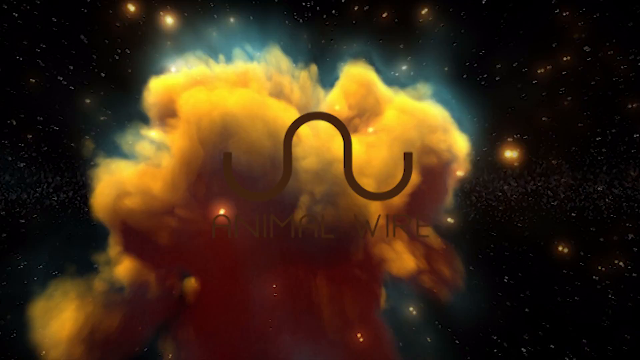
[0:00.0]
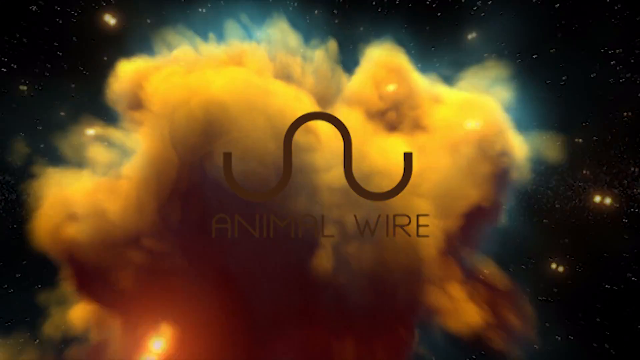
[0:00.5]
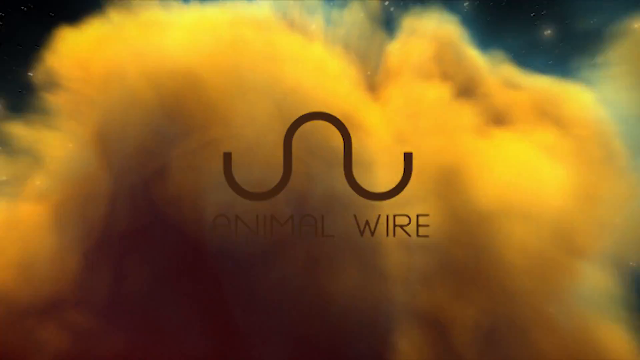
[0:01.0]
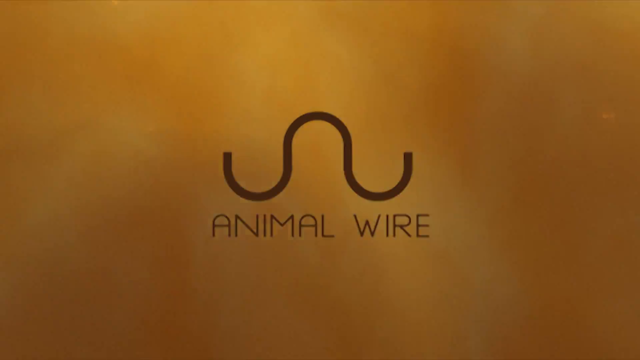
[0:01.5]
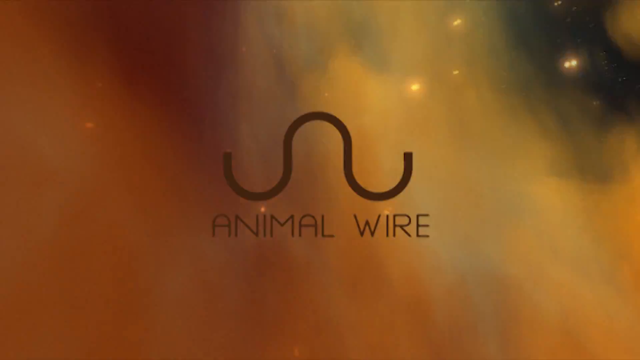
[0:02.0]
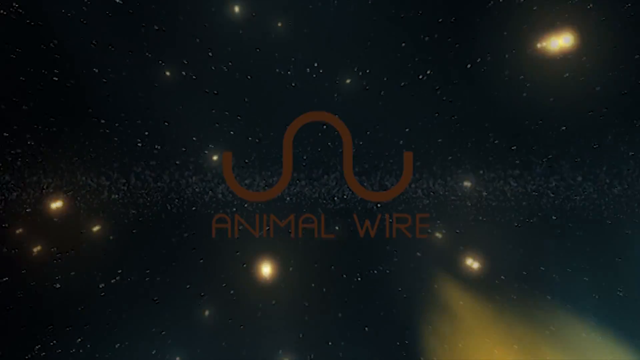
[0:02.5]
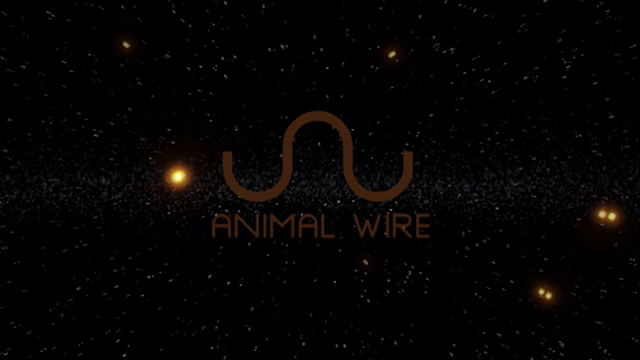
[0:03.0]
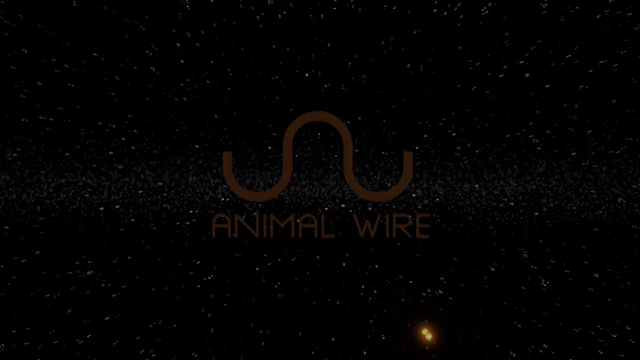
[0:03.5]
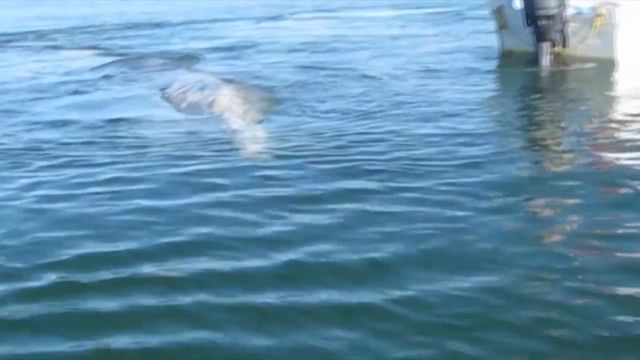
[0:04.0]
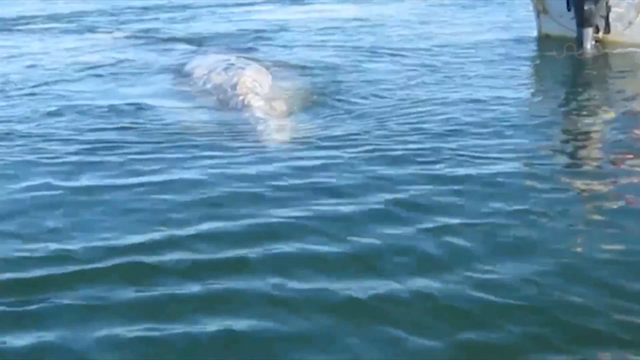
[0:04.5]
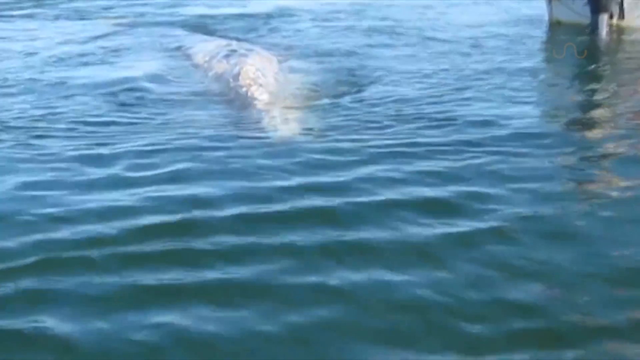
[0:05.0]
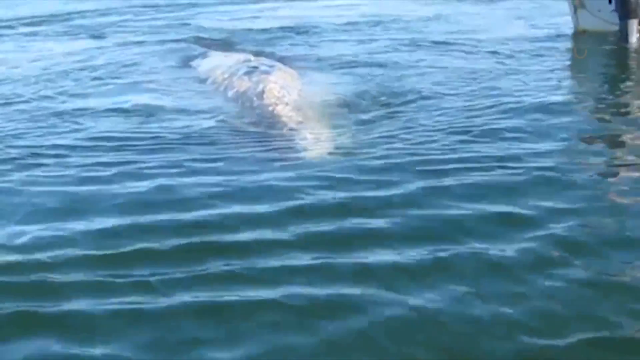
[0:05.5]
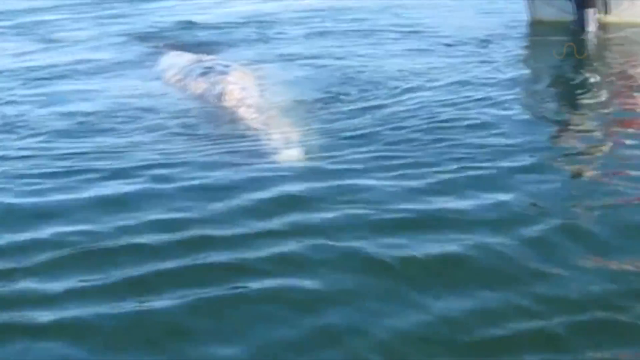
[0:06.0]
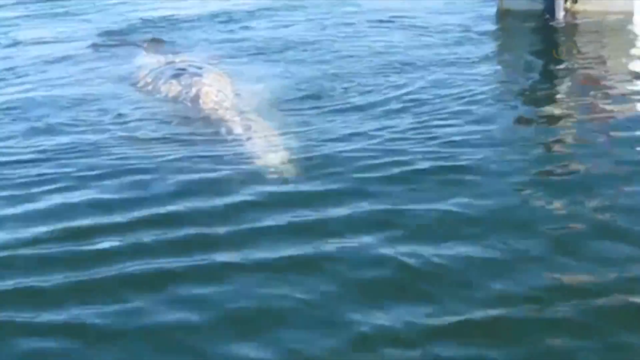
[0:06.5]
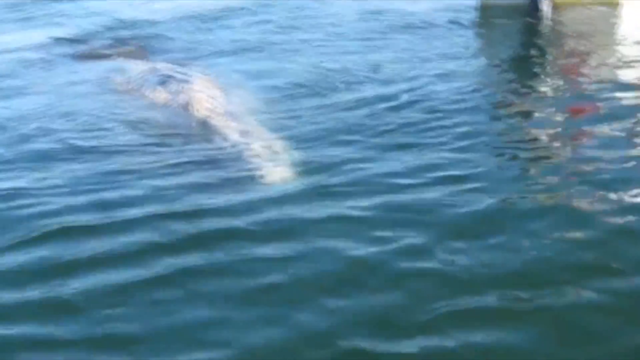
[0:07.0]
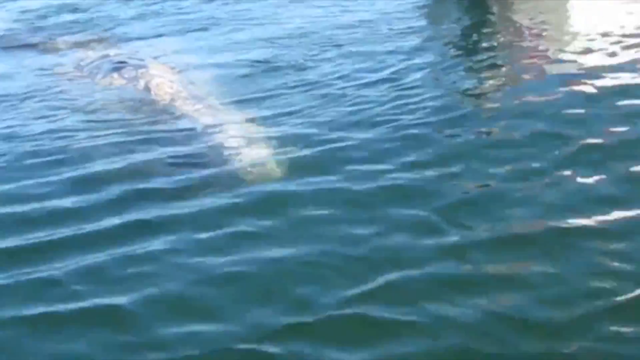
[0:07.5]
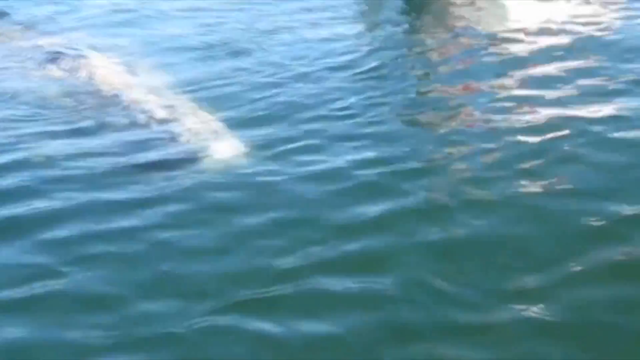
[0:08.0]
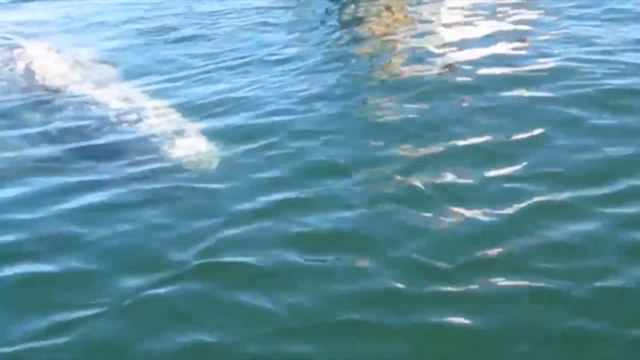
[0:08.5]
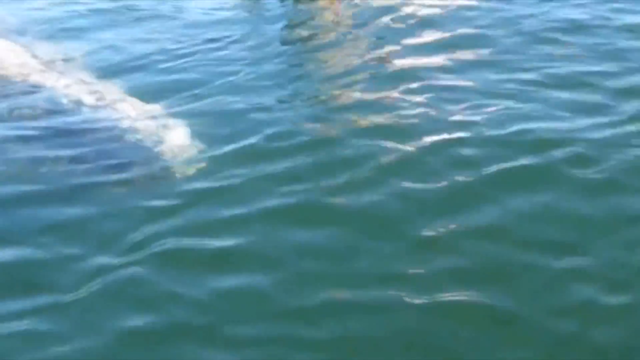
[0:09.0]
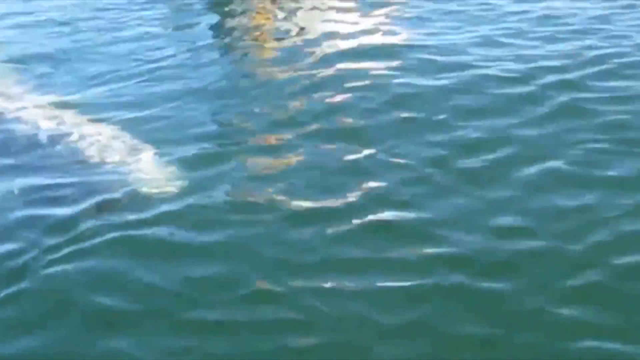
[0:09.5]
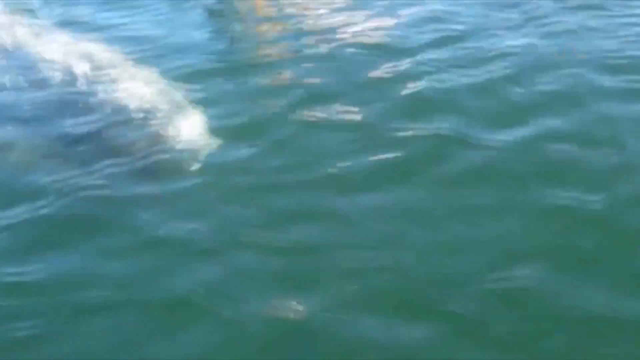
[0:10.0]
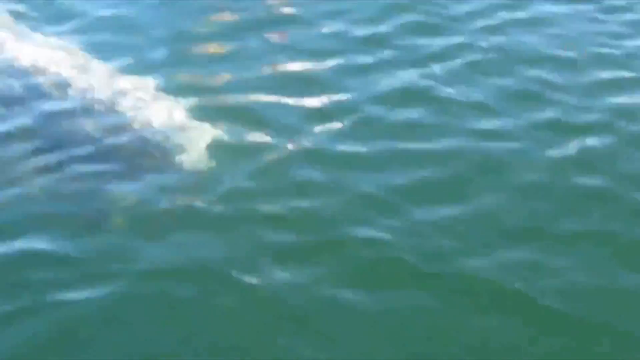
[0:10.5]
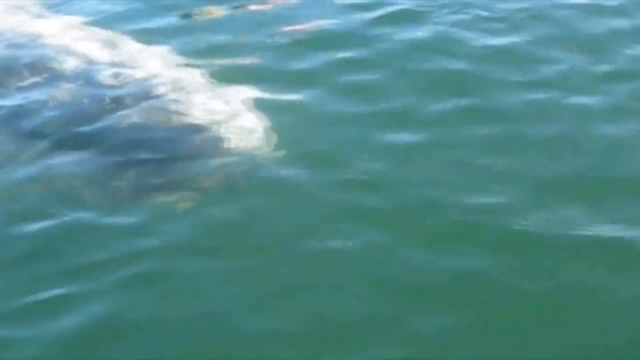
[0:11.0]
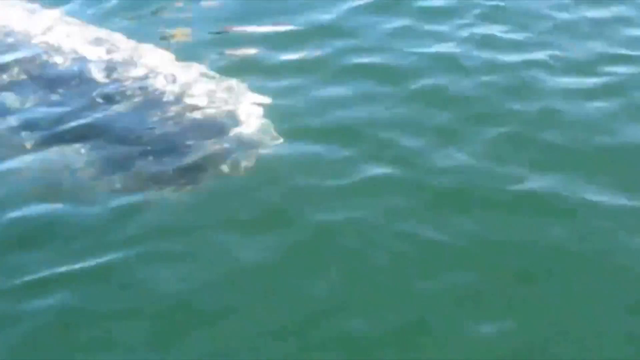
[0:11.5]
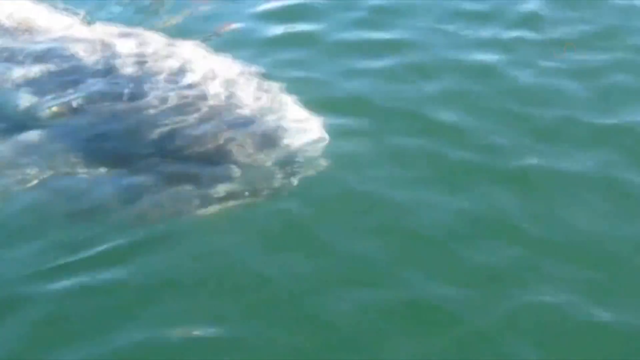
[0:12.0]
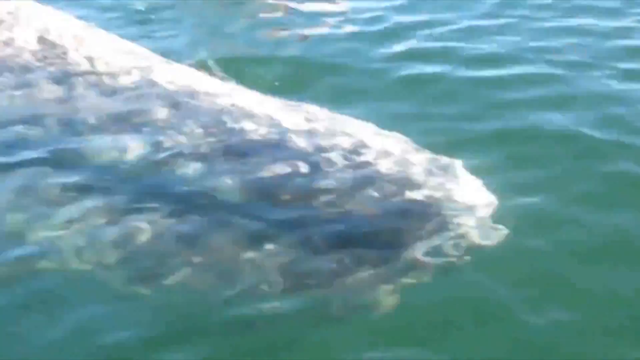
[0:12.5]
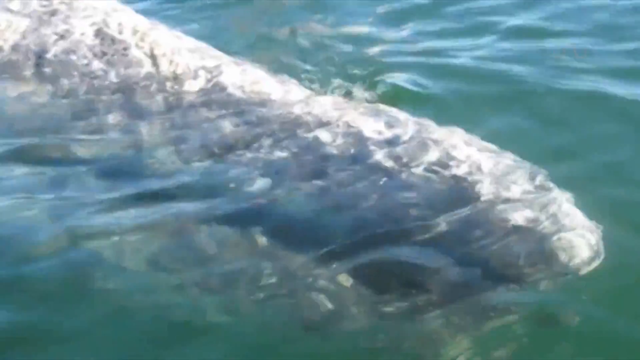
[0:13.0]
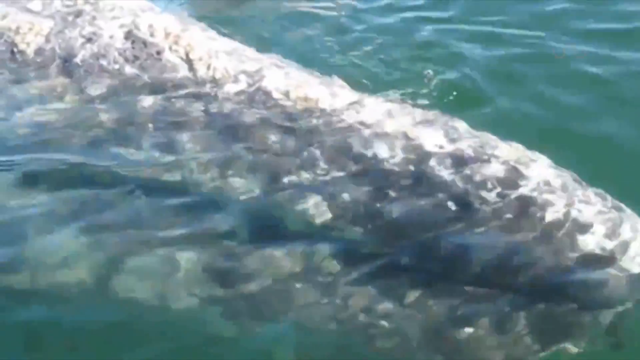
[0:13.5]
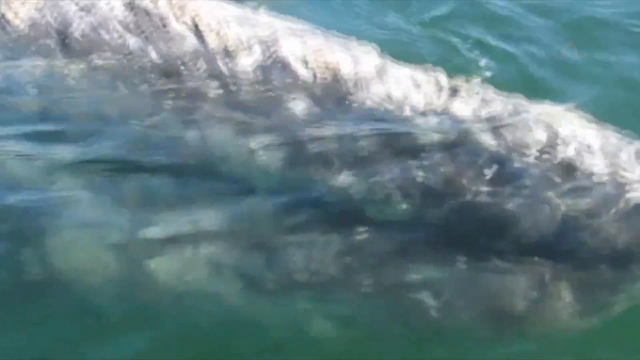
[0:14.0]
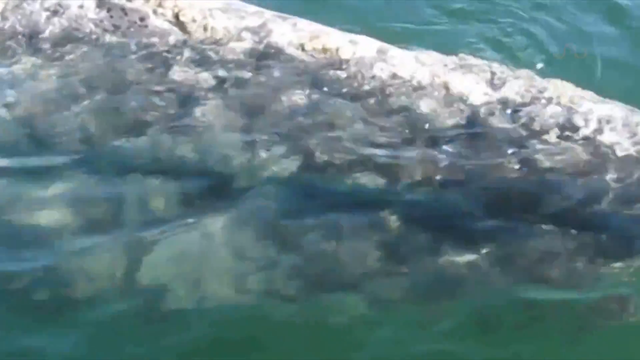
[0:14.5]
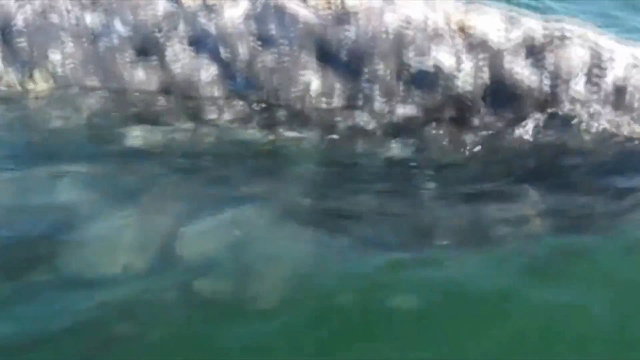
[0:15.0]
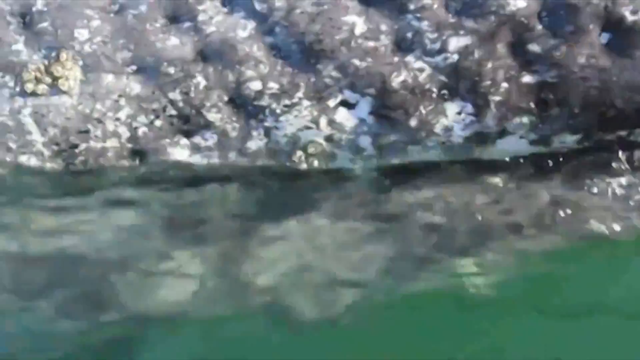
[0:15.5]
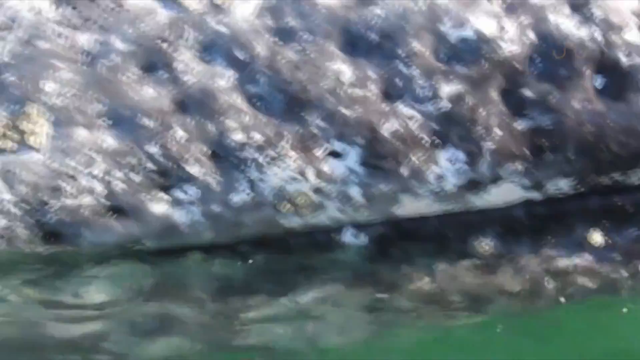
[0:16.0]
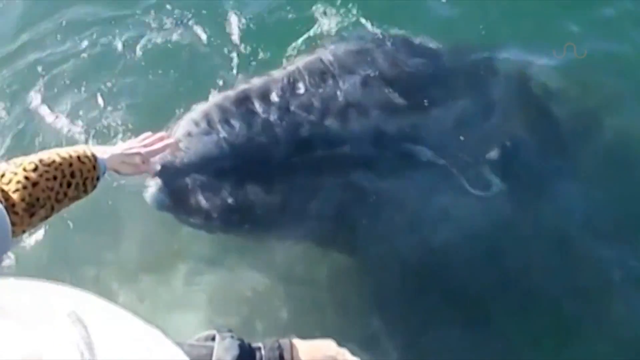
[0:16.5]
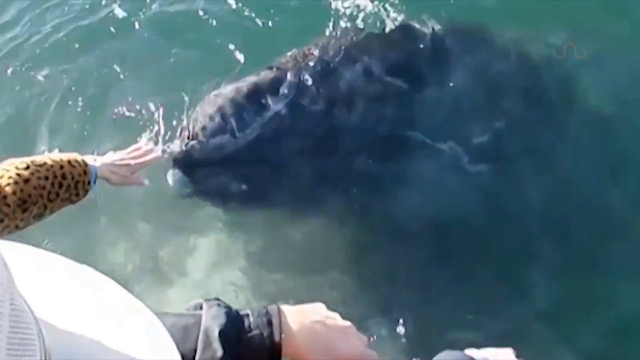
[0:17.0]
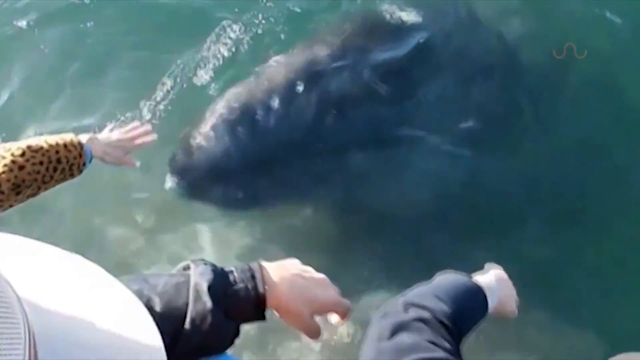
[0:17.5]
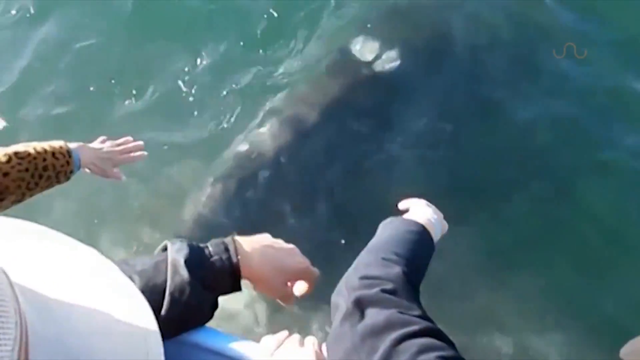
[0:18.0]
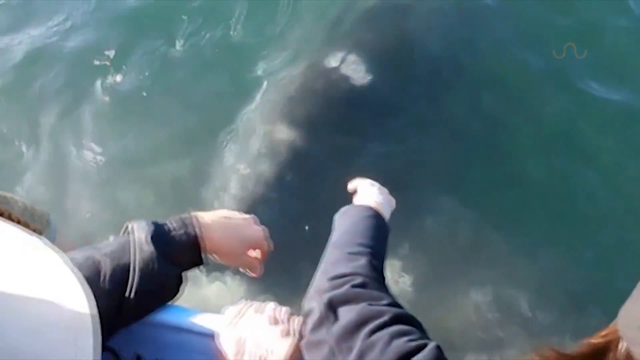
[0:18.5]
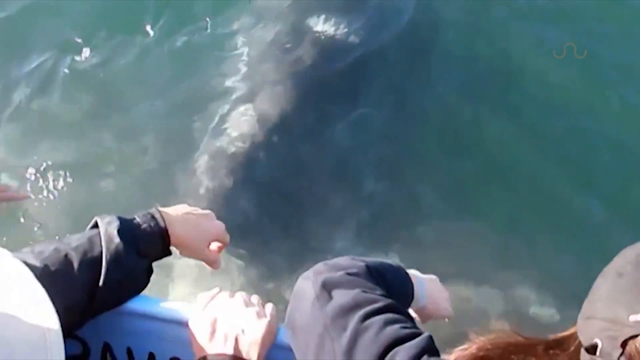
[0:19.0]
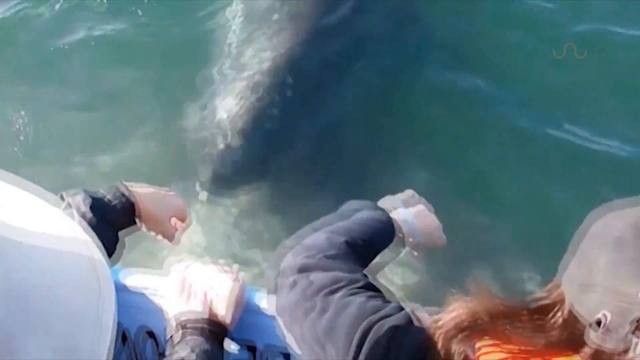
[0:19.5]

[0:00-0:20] The video opens on what appears to be a scene in space: a big explosion of some type of light or cloud with a halo around it, apparently surrounded by stars. A big symbol comes up in the center, then the words "animal wire" appear, and the view goes out into full space. Next comes a body of water with some type of animal floating in it; it looks quite large, and only part of it is visible. In close-up it looks like a piece of rock, but it is some type of large animal, maybe a whale, and almost looks like a piece of decaying wood. People in a small boat, which looks like an inflatable boat, reach out of it and touch the animal. They are clearly trying to do something with it, though it is not clear what.